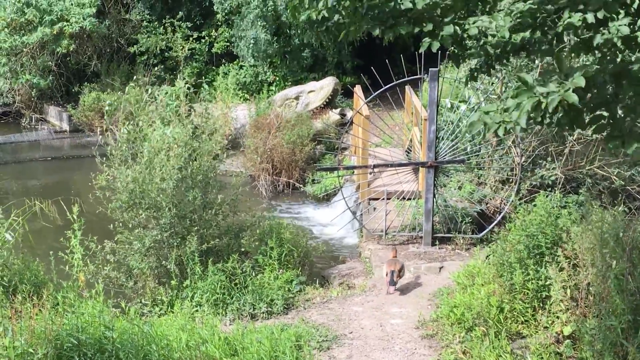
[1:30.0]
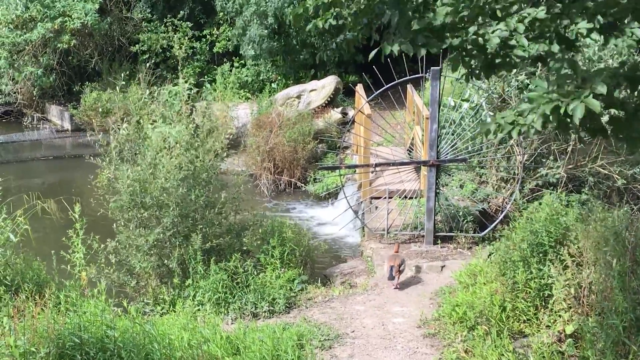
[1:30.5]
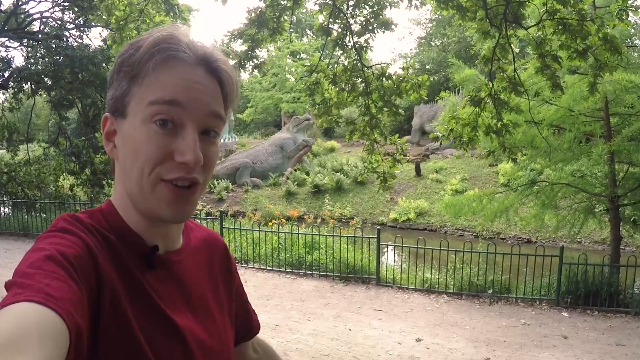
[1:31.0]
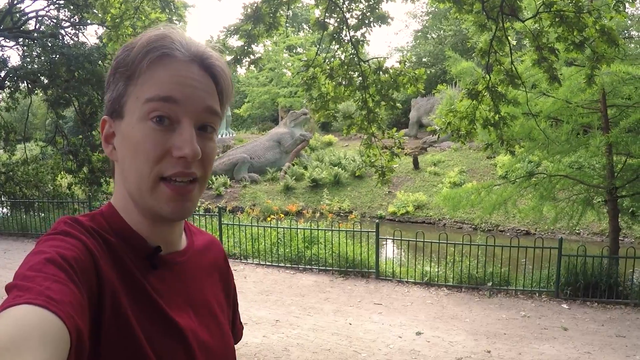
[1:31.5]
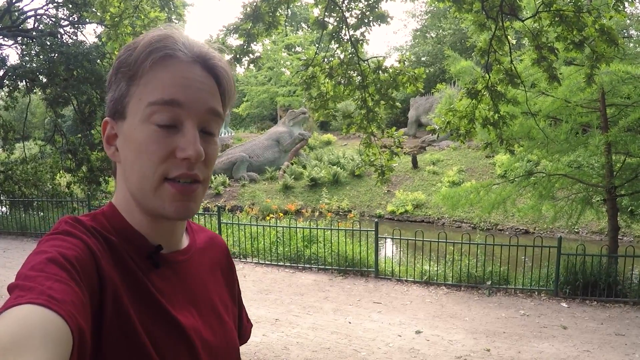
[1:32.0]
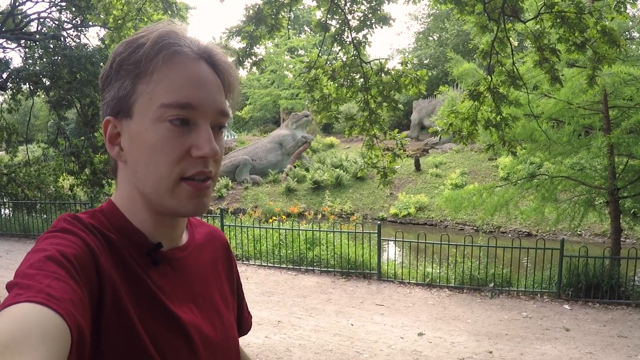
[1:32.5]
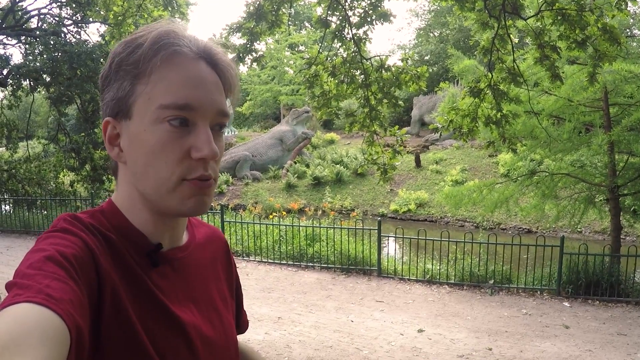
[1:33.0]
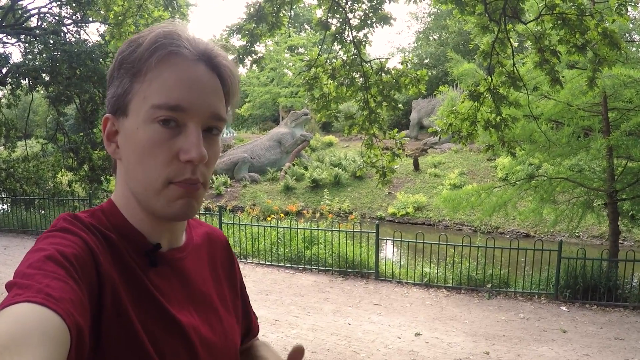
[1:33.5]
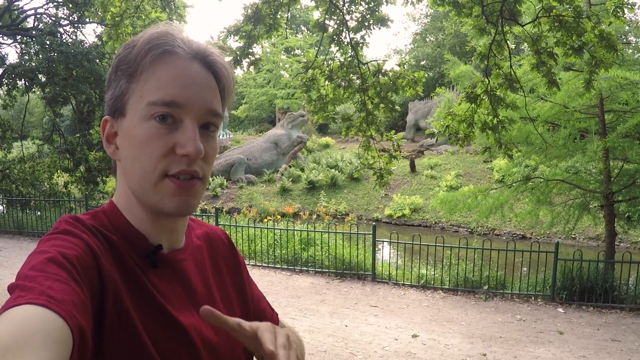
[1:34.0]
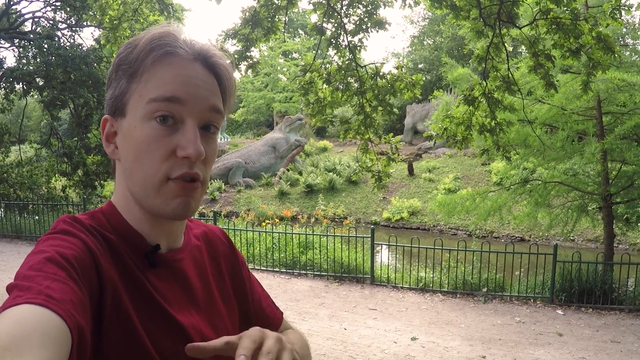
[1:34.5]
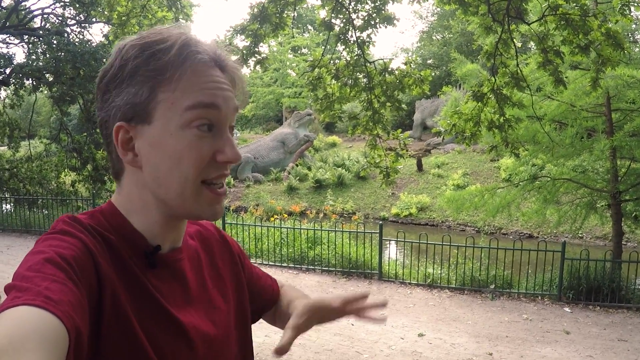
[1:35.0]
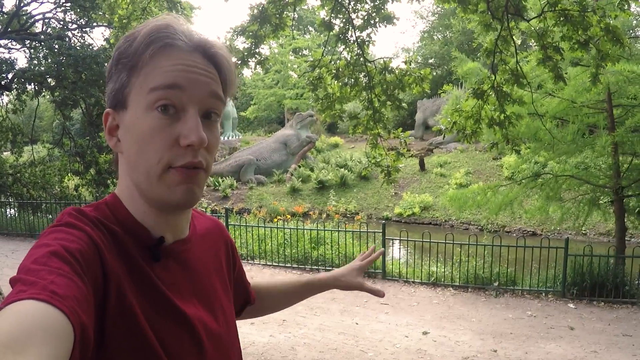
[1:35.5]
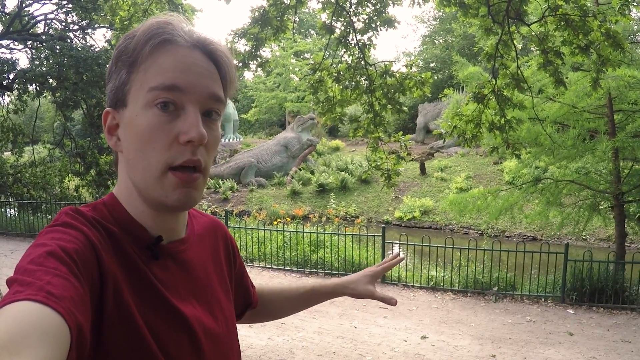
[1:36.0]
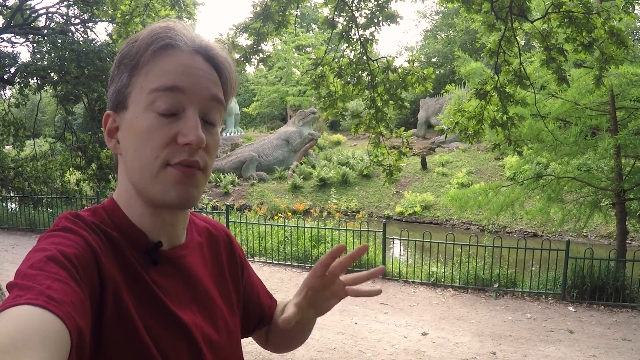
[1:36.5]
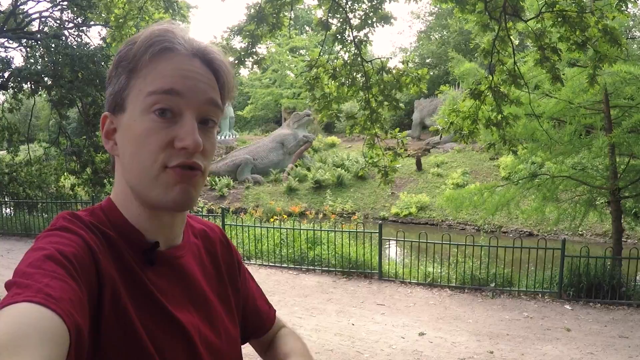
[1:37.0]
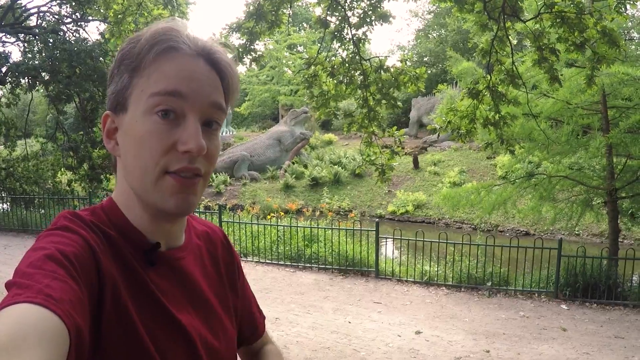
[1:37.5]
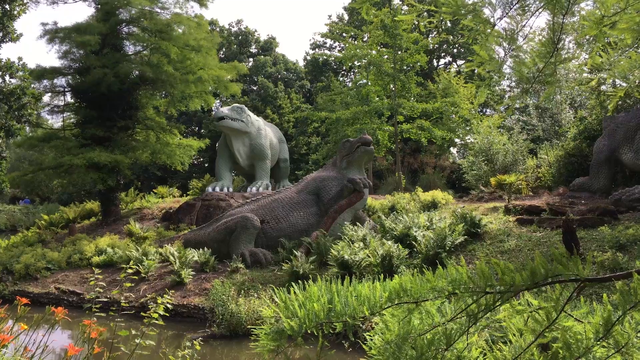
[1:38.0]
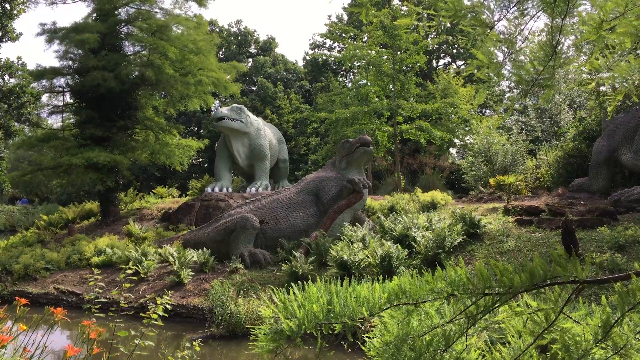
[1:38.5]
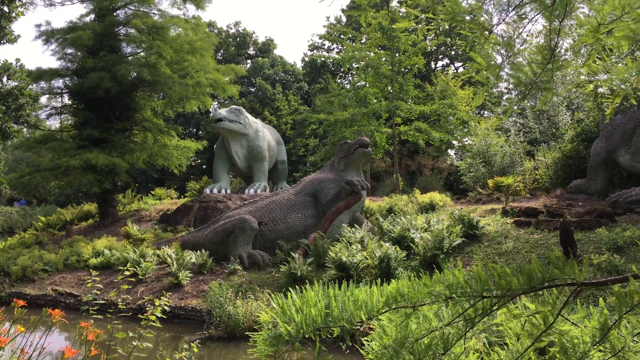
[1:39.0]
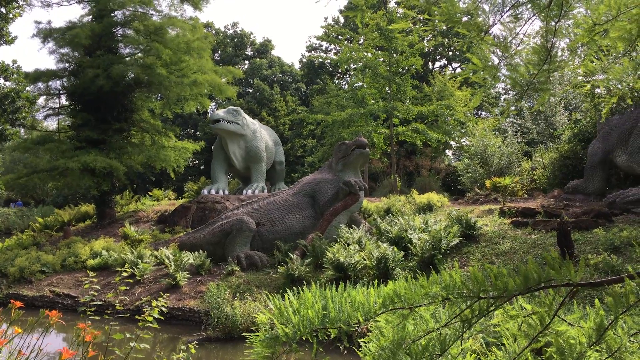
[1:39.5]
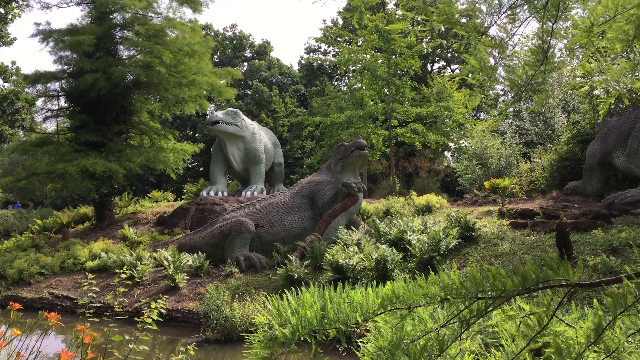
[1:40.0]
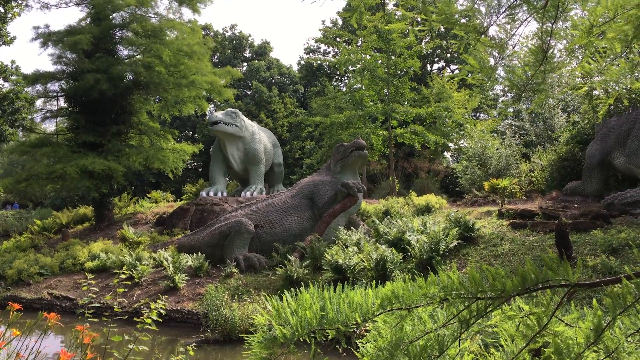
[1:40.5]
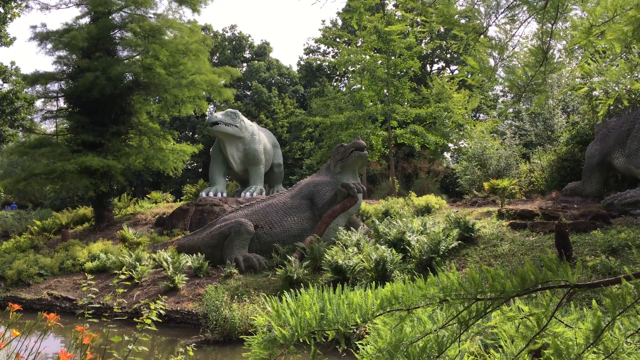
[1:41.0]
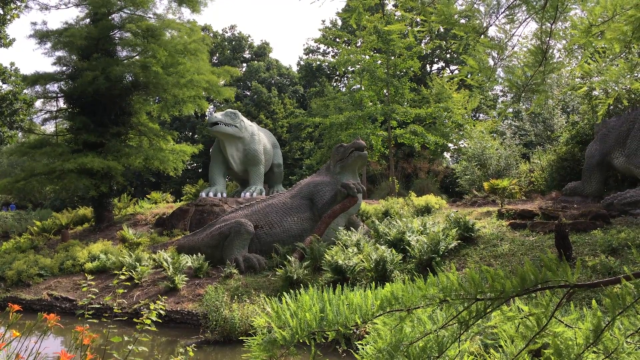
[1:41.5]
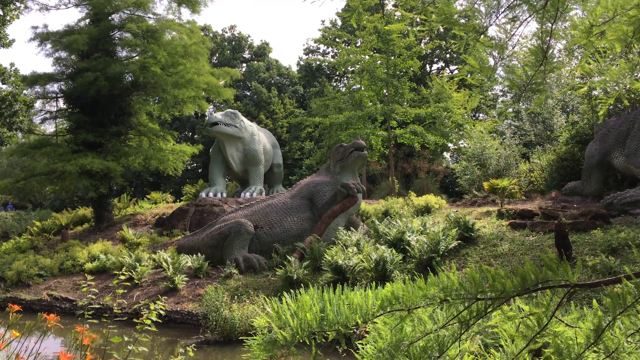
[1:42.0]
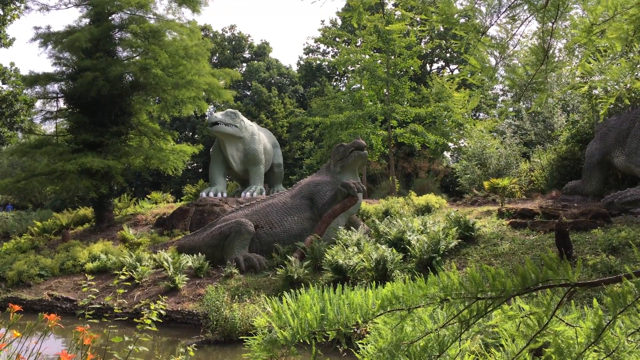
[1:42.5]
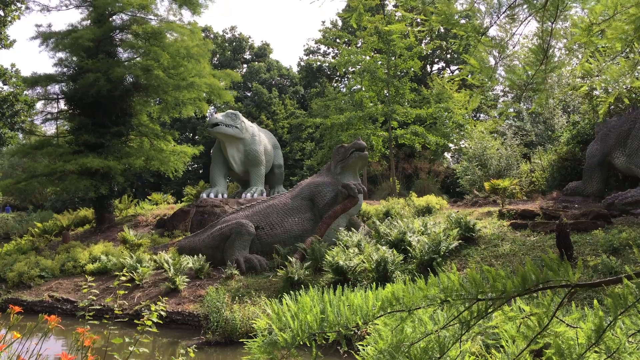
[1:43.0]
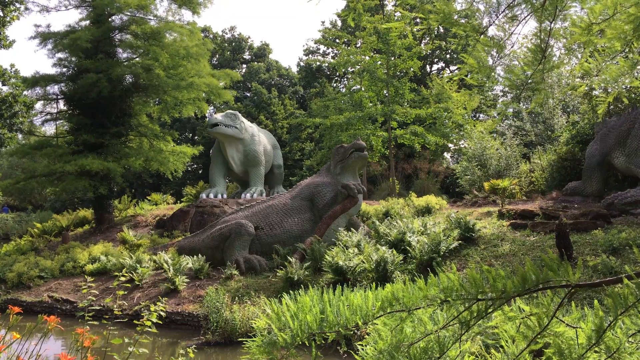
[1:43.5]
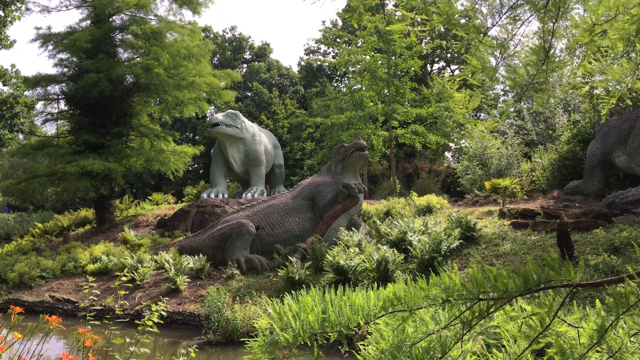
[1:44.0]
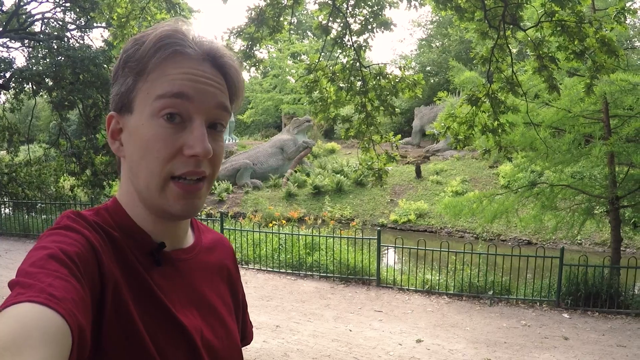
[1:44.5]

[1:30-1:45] Another scene in the outdoor park shows a bird walking down a path toward a fan-shaped gate; behind the gate is a dinosaur statue partially covered by the foliage, bushes and trees surrounding it. The video switches back to the presenter, who speaks directly to a camera he appears to be holding in one hand as he gestures toward a display behind him showing two large dinosaur statues surrounded by foliage and trees. He wears a short-sleeved red t-shirt with a microphone clipped to its neck. The video then switches to another close-up of two large dinosaur statues standing in a grassy area surrounded by very dense trees with lots of leaves, with some rock outcroppings in that area of the park. It switches back to the presenter, standing on a path in what is presumably a large outdoor park with these statue displays. He is still looking at the camera and has not moved from his position at the beginning of the video.